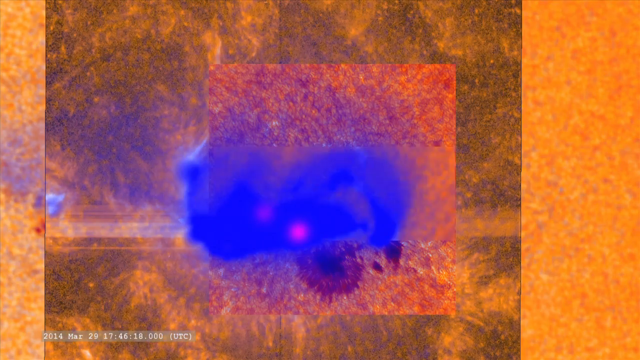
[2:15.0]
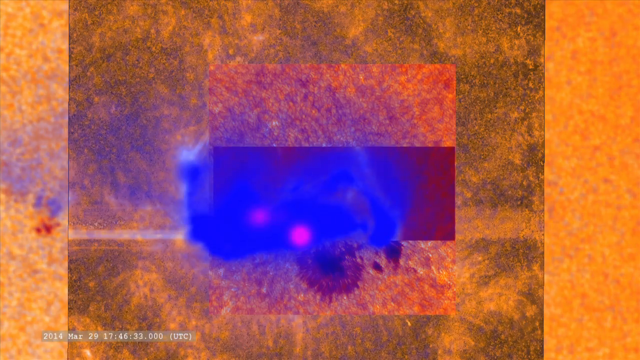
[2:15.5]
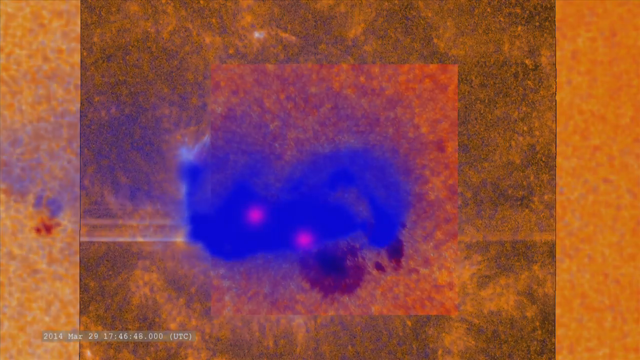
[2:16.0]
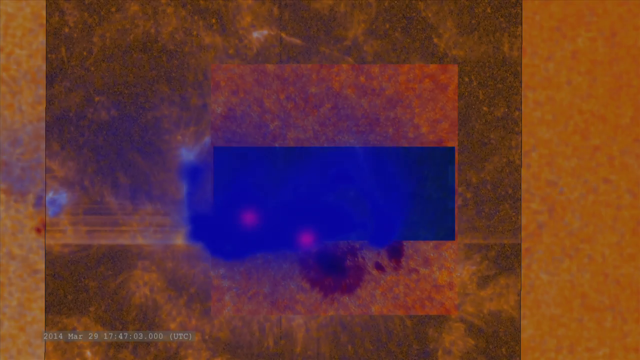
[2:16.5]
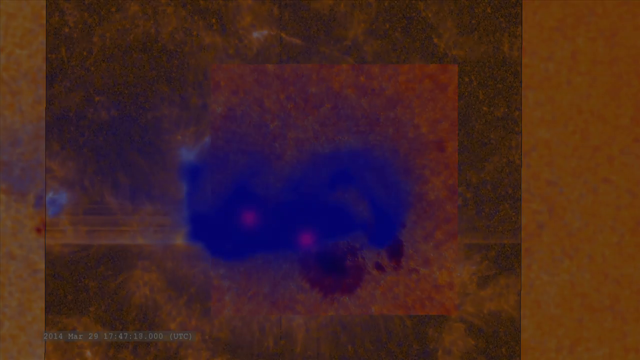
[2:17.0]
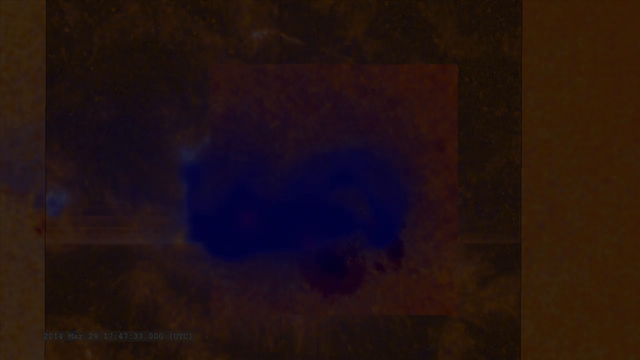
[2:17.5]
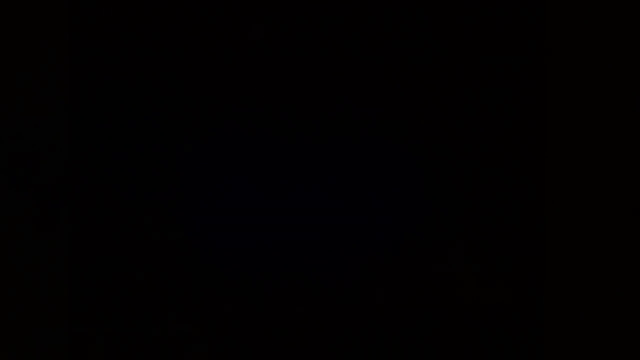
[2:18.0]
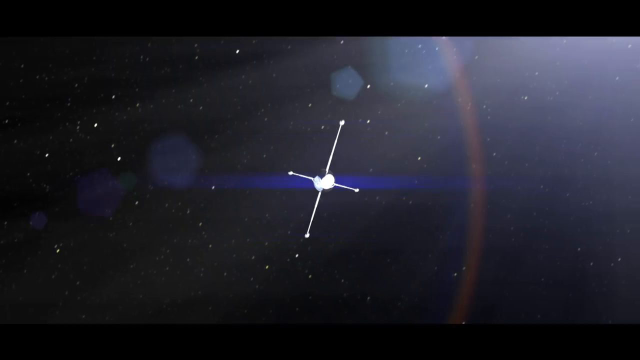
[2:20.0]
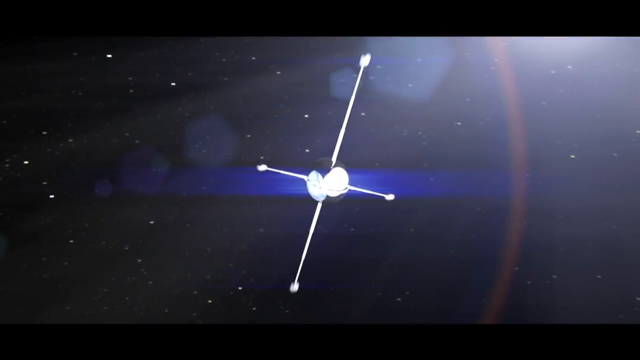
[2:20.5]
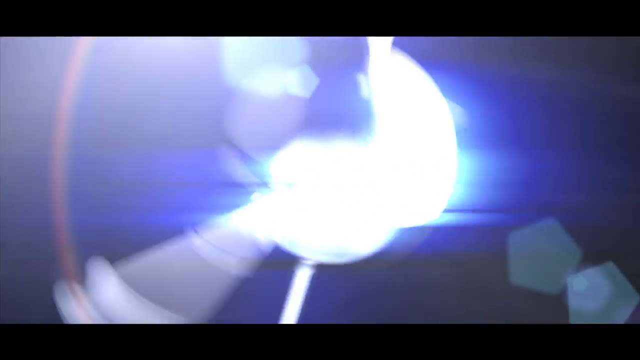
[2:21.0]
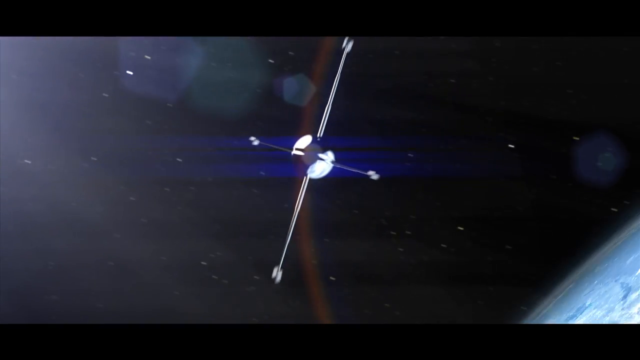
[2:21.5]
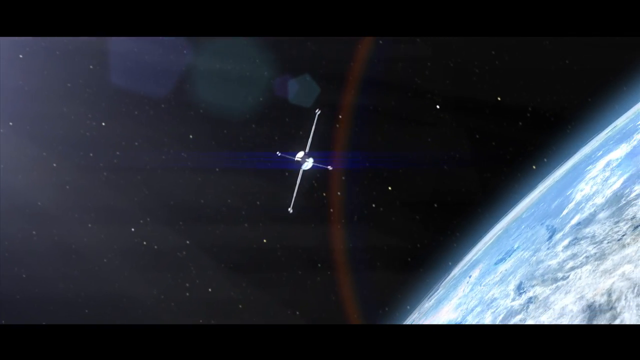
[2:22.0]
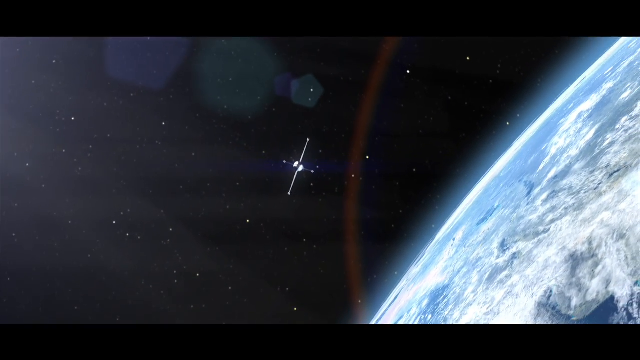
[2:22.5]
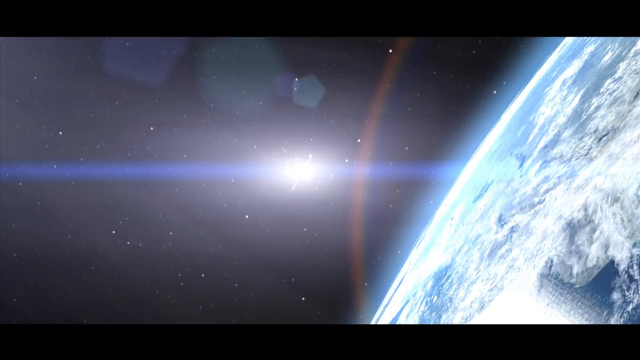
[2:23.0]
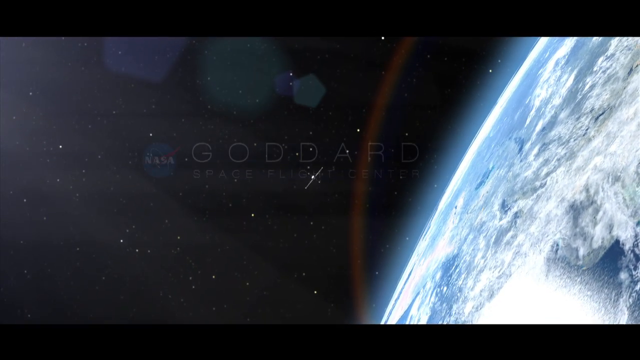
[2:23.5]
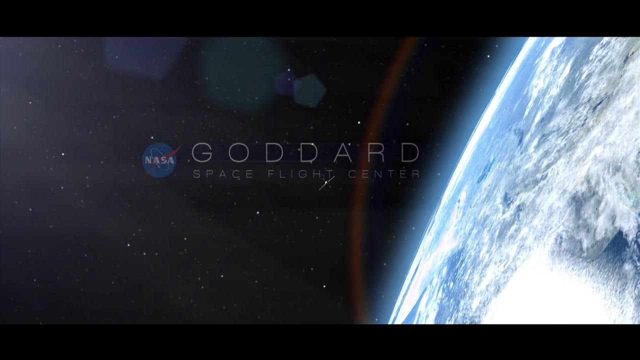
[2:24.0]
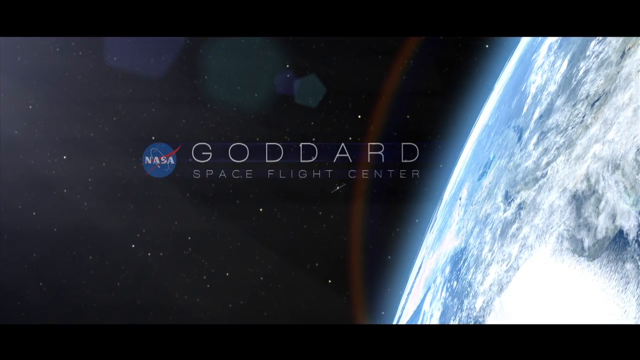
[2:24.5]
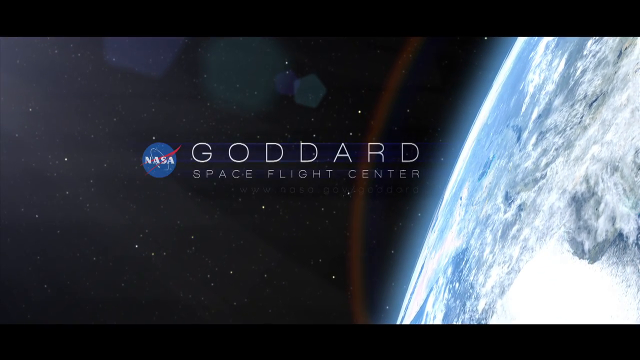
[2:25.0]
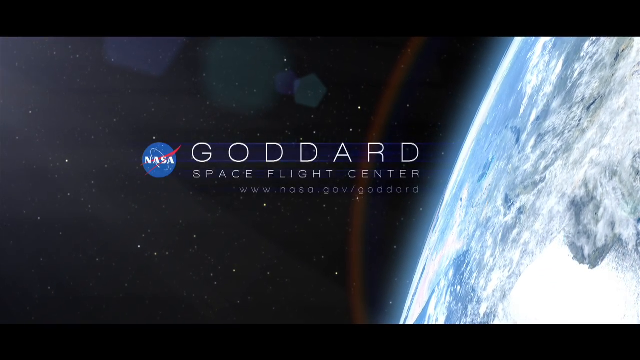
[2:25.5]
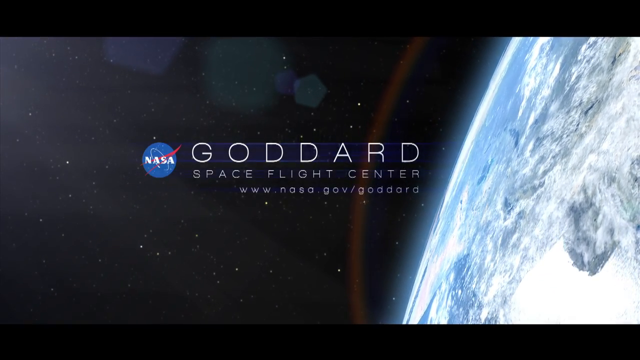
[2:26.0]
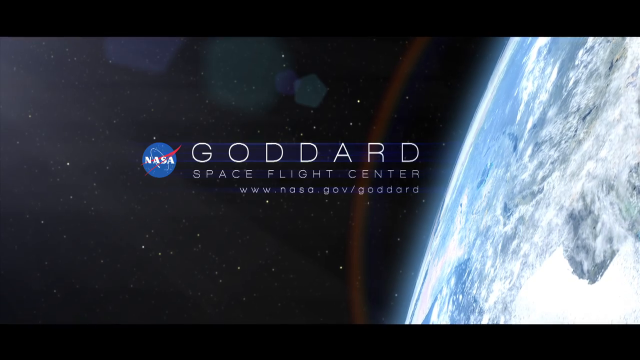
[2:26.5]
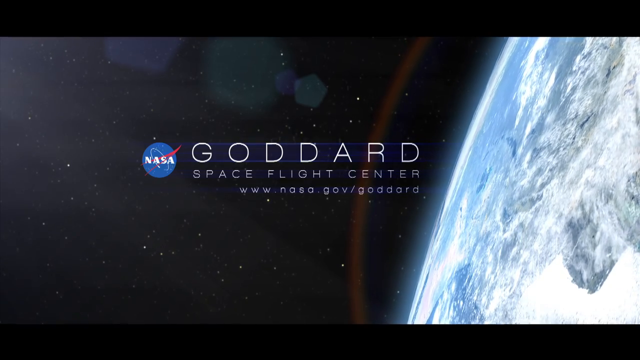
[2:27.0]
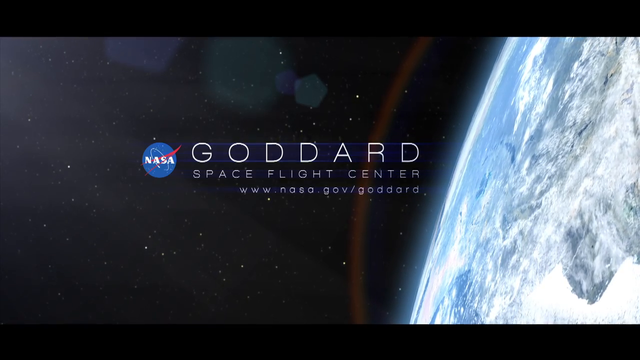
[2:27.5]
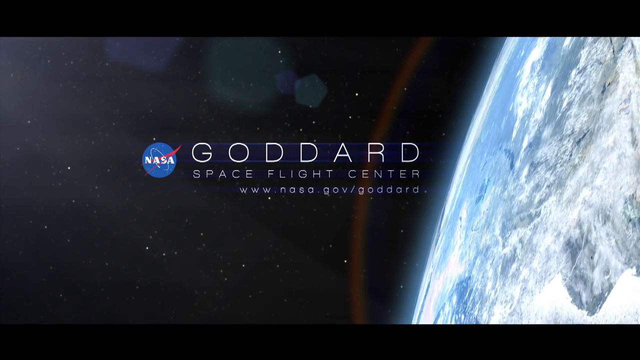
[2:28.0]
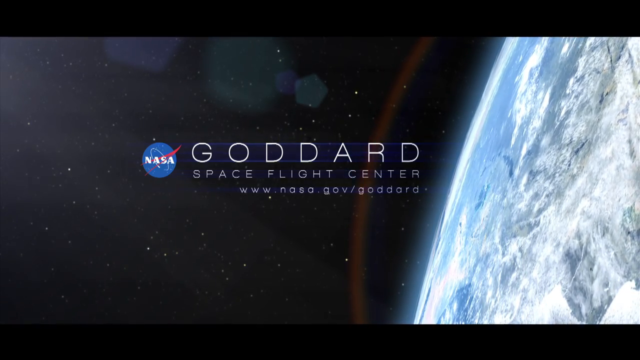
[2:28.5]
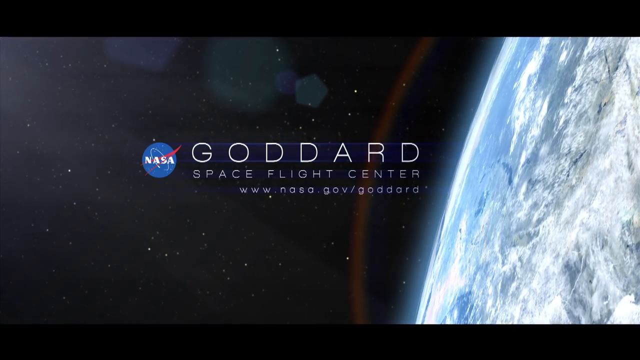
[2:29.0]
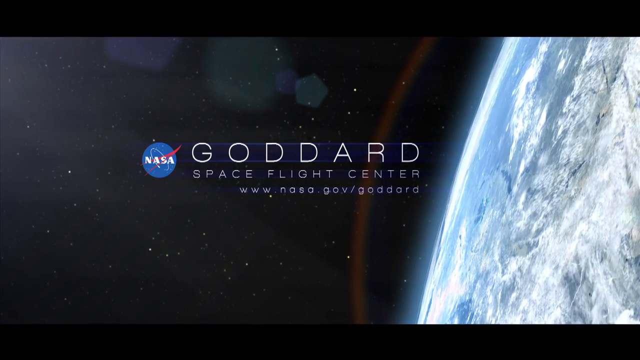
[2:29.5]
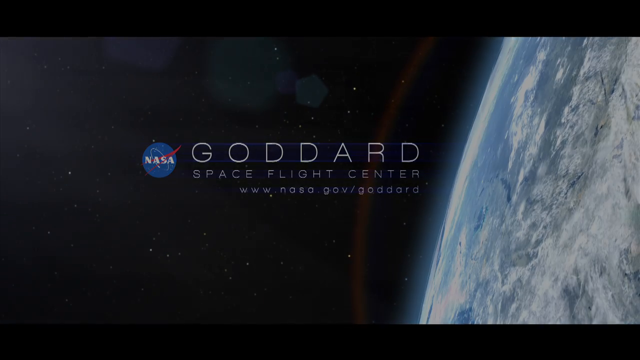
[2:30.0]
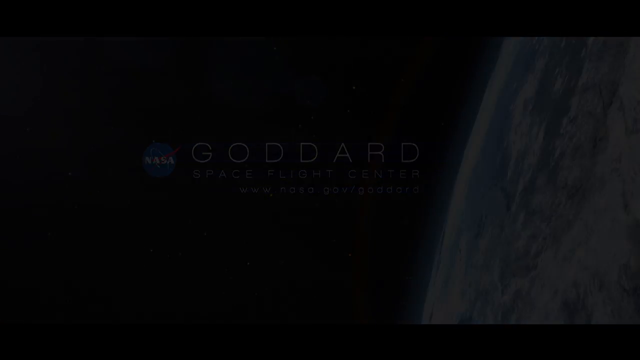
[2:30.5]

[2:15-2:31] Several close-ups of the Sun are on the screen, overlaid in clearly separated boxes. A bright purple and blue flashing box is in the center, and behind it dark orange and reddish boxes show other close-up pictures of the Sun. The images flash and change, then fade into darkness, and the screen goes black for a moment. Then a computer-generated satellite soars through space; it flashes, catching the sunlight for a moment, and keeps soaring around the Earth. On the right is a close-up of the Earth, probably computer-generated, with blue ocean, white clouds on the surface and the blue atmosphere around it. There is a lens flare that looks orange next to the Earth, and some pale light spots to the left. The sky behind the Earth is black with white stars. The satellite is bright silver and shines, catching the light. Then the NASA logo appears with the text "Goddard Space Flight Center" in white next to it. Black stripes then appear at the top and bottom of the screen.